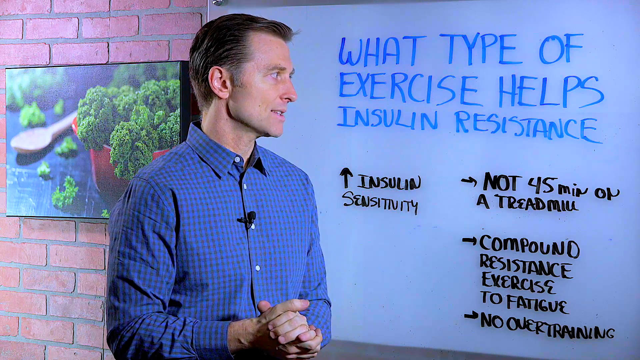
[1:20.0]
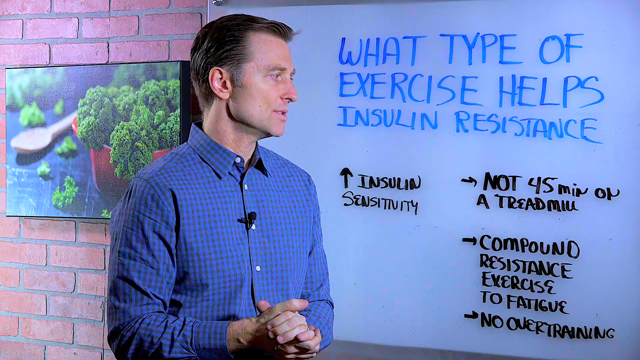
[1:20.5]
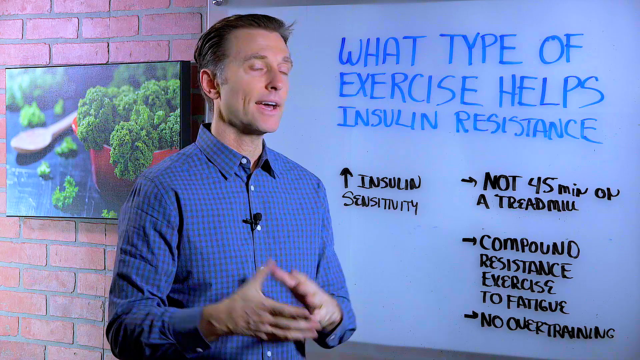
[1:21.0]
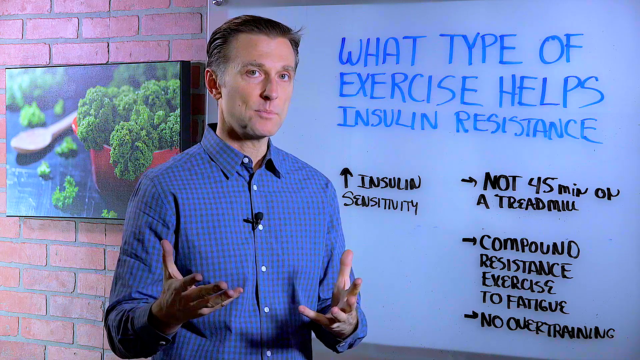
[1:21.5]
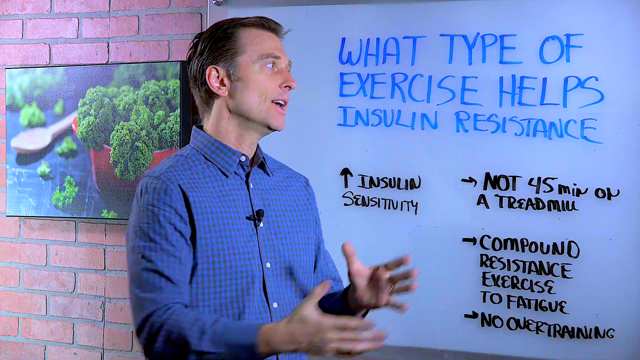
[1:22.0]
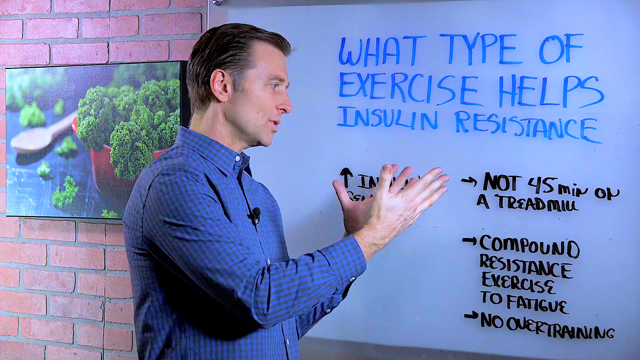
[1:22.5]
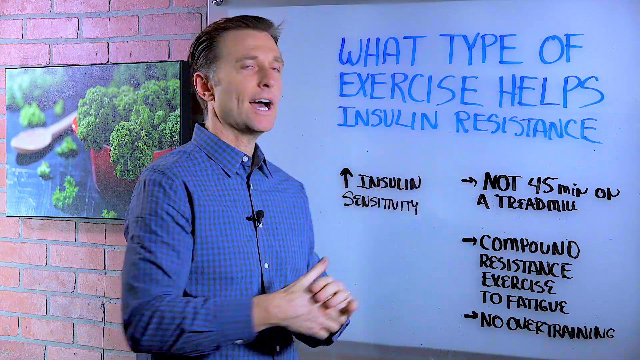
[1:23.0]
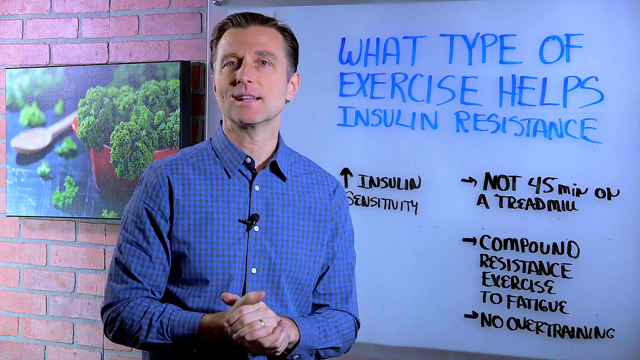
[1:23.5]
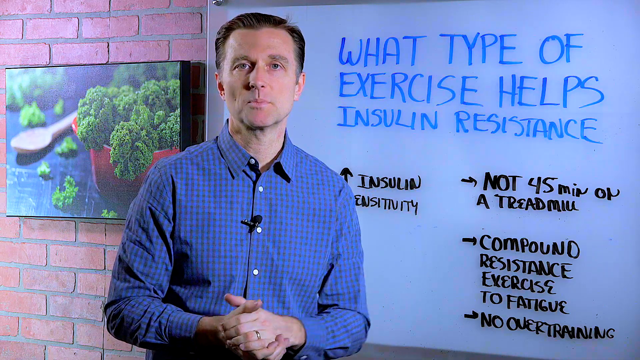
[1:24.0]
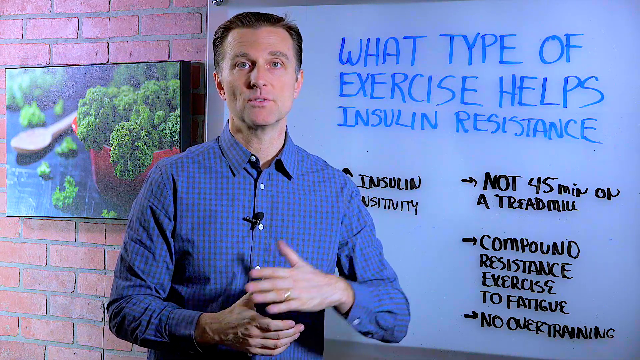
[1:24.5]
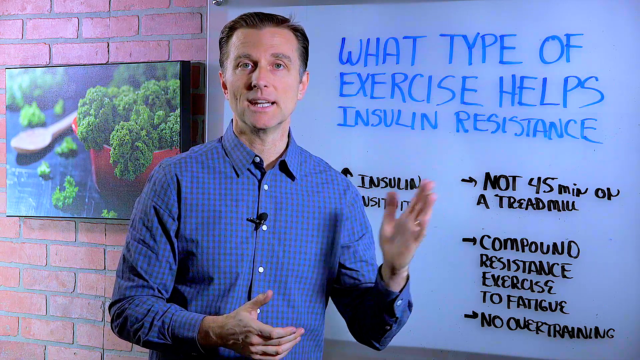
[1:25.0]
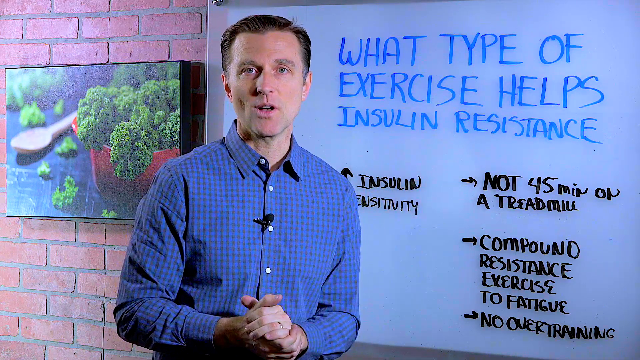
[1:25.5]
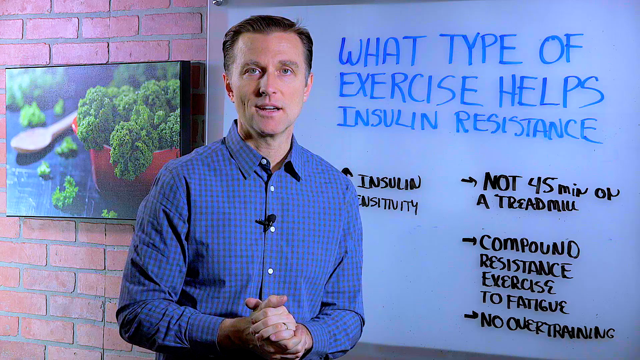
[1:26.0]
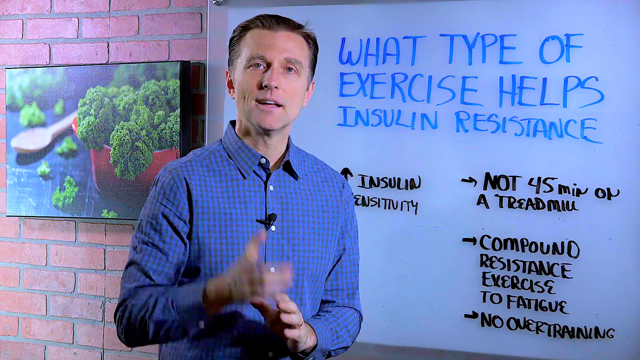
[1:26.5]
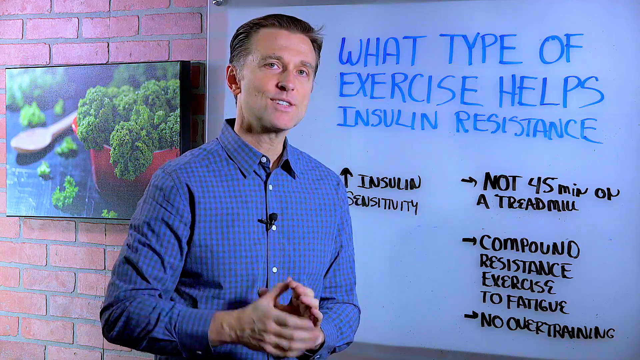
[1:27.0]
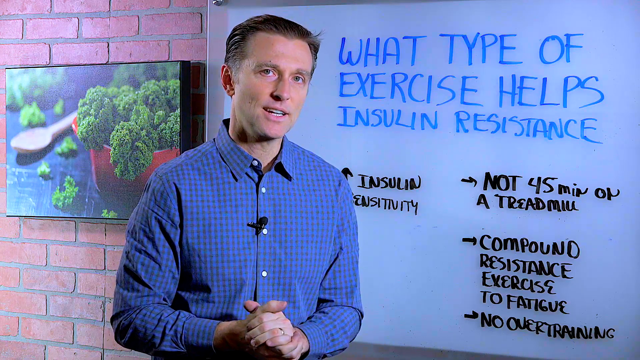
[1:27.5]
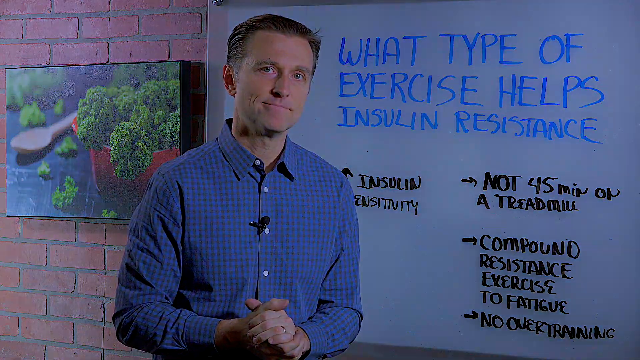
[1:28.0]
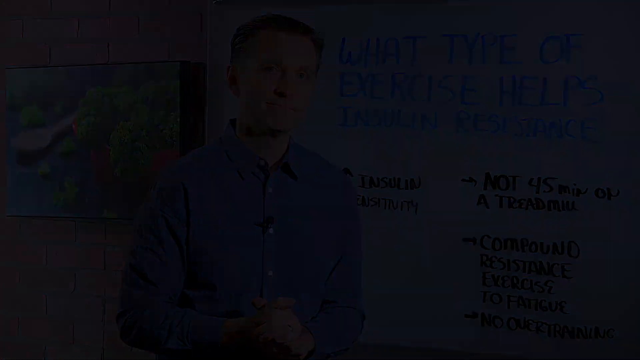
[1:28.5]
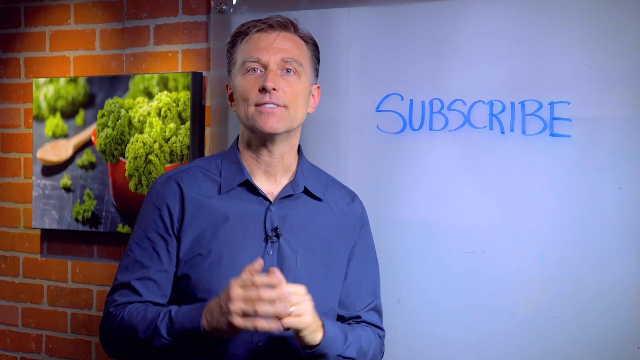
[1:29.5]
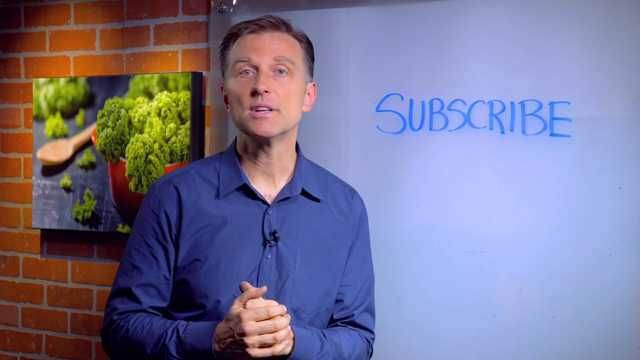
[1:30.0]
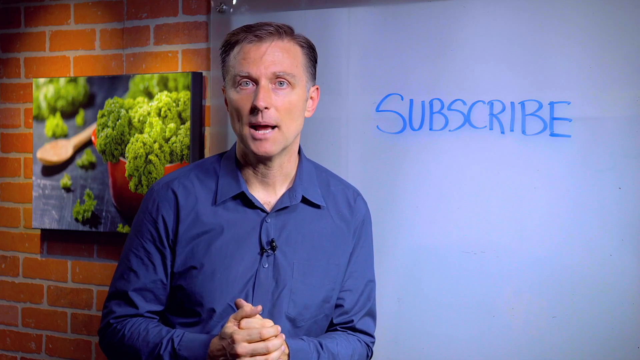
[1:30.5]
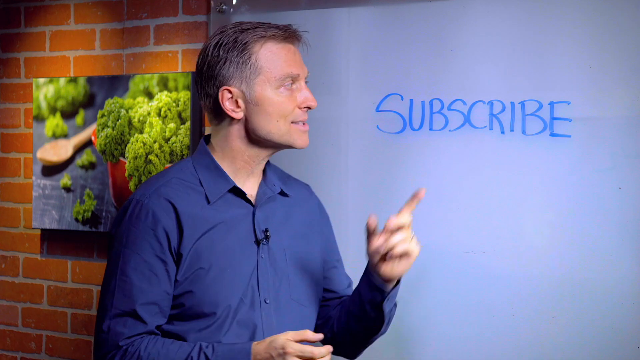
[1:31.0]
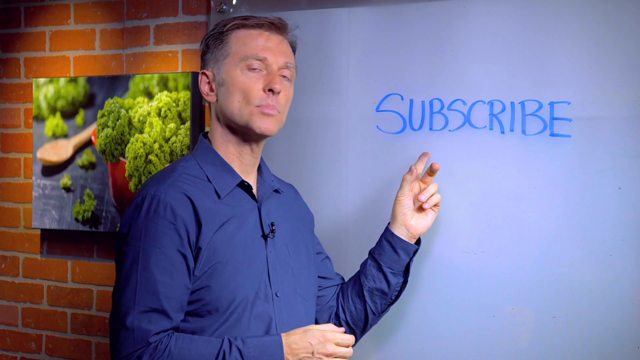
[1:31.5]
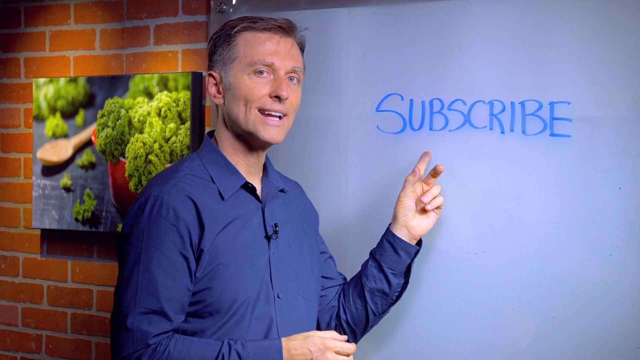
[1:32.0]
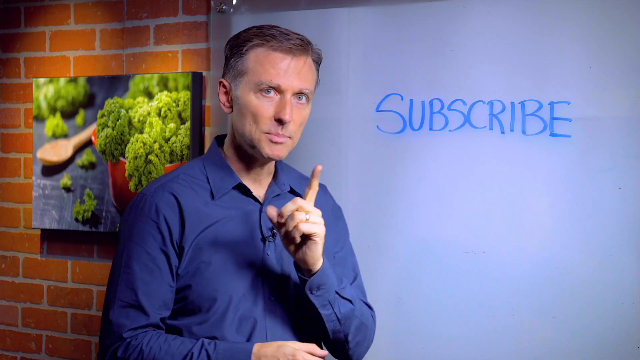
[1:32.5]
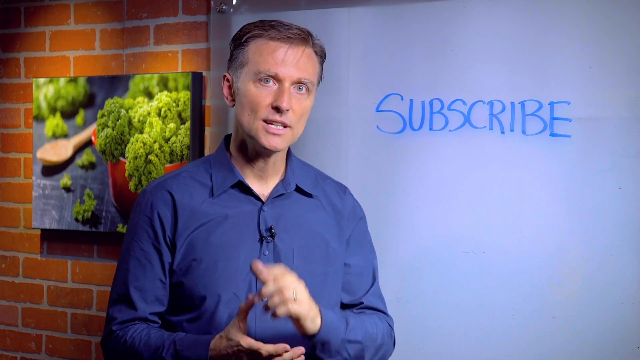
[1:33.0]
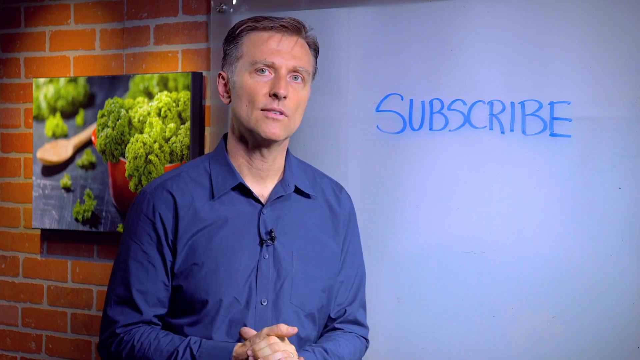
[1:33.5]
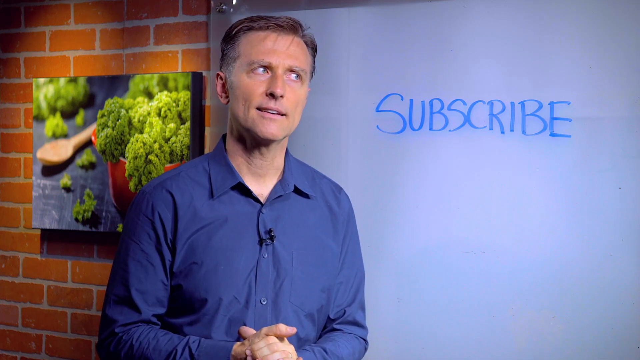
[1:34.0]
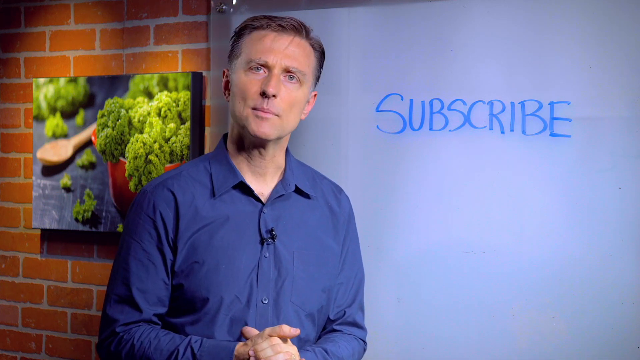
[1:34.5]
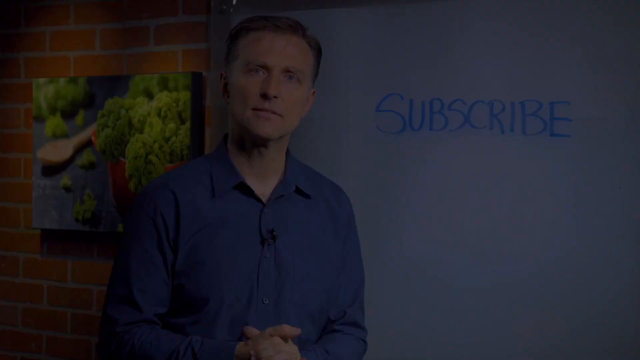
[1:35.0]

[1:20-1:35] The same man, in the blue plaid button-up collared shirt with the microphone attached, is still using his hands in front of the whiteboard, with the red brick wall with normal-colored cement or mortar behind it. To his left is the black-framed picture of a red bowl with lettuce kind of spilling out of it and the wooden spoon. At the end of the video it flashes to the whiteboard being erased, and he points to the word "subscribe". In that last part he wears a different shirt: a plain blue, not plaid, collared button-up.